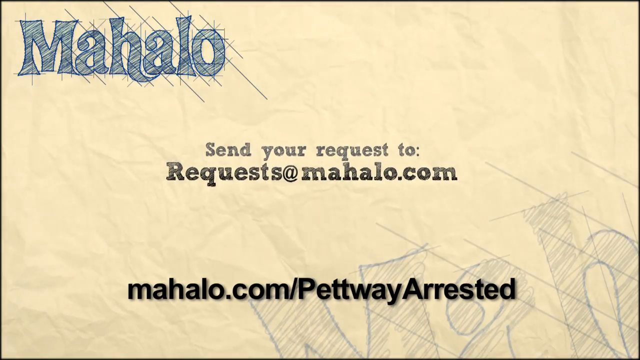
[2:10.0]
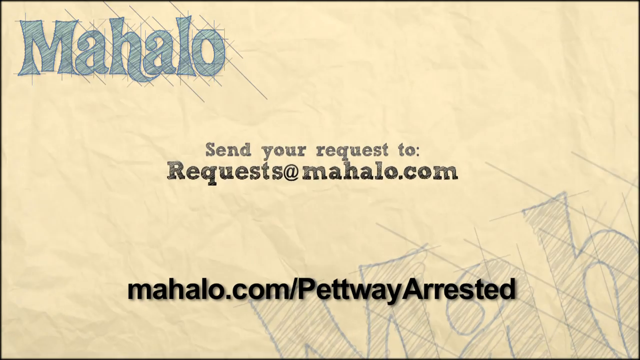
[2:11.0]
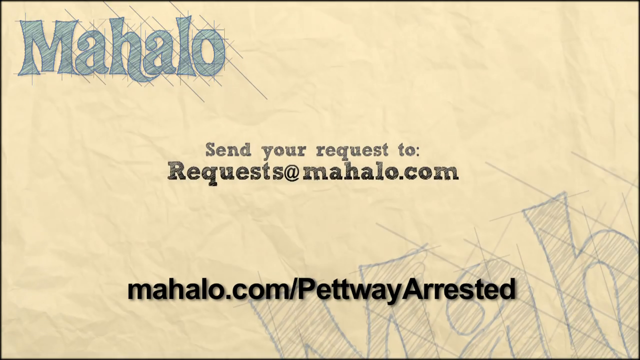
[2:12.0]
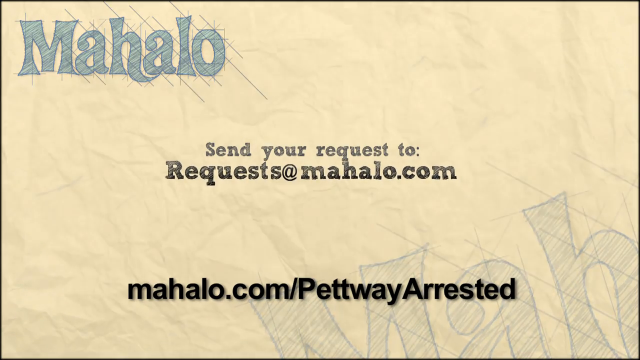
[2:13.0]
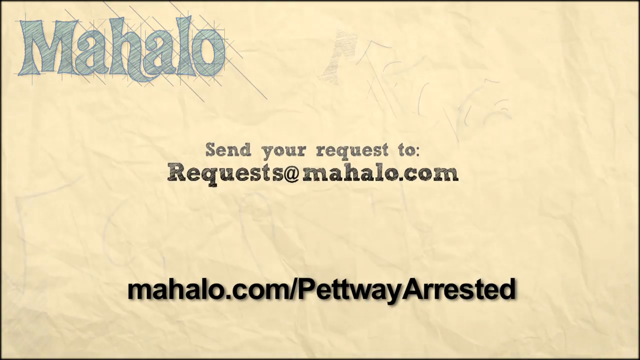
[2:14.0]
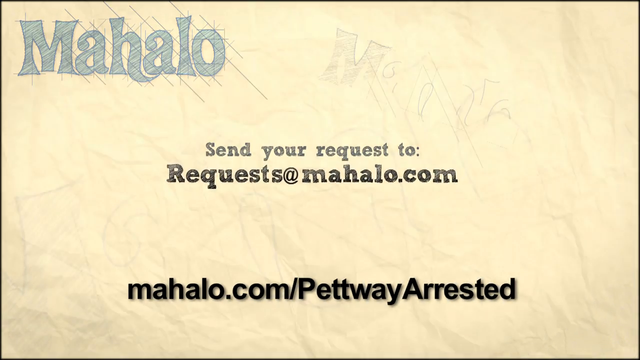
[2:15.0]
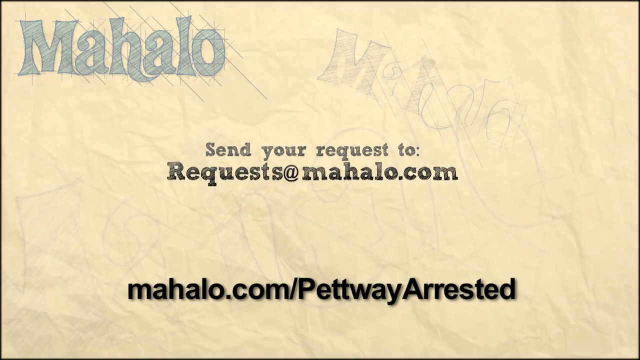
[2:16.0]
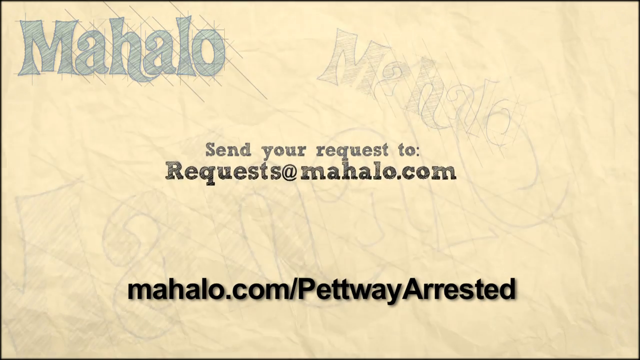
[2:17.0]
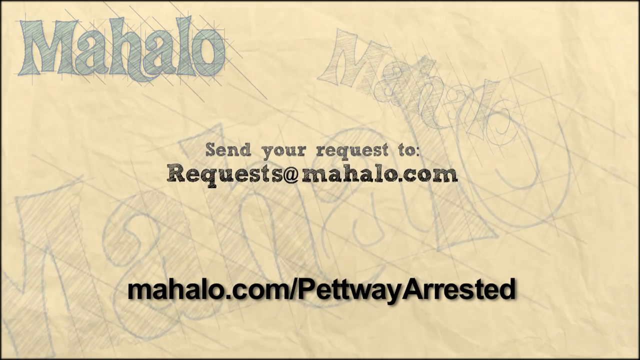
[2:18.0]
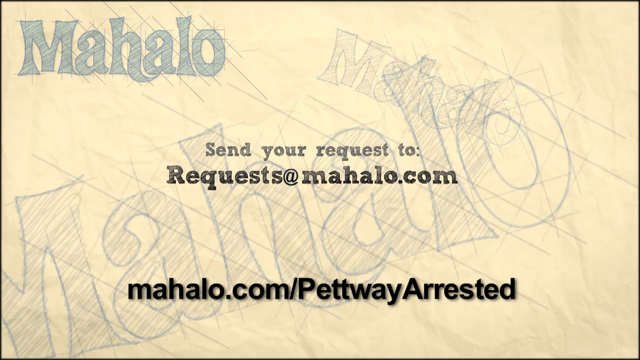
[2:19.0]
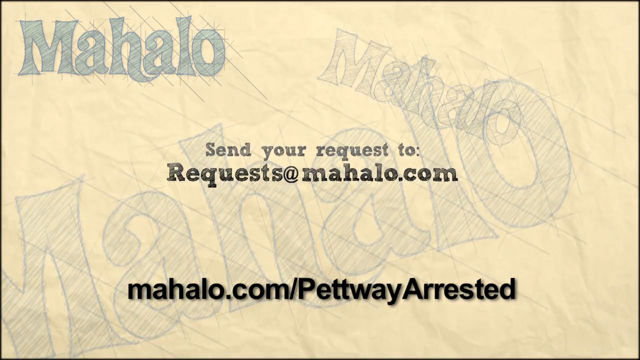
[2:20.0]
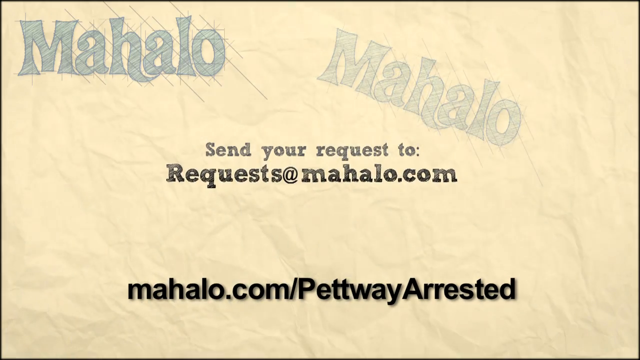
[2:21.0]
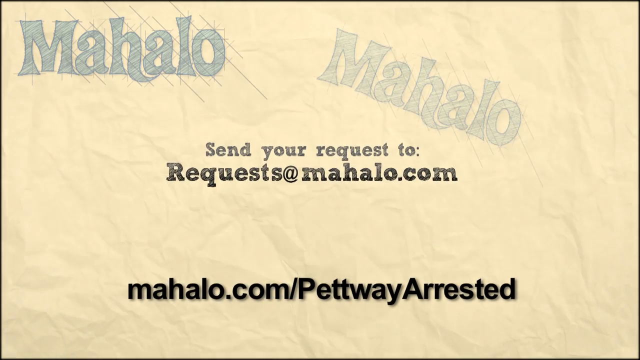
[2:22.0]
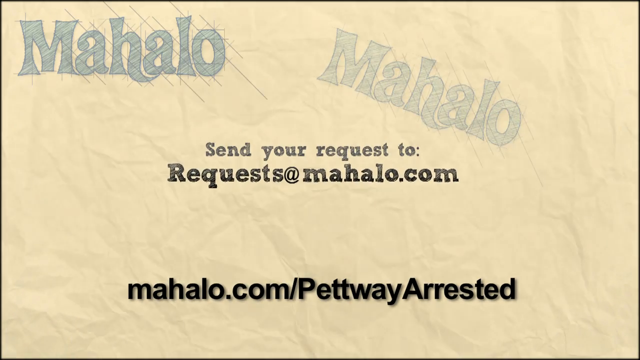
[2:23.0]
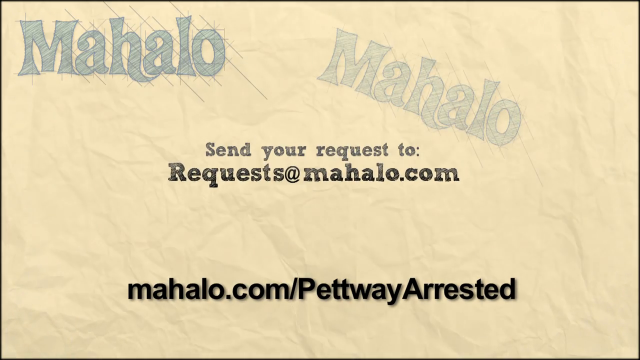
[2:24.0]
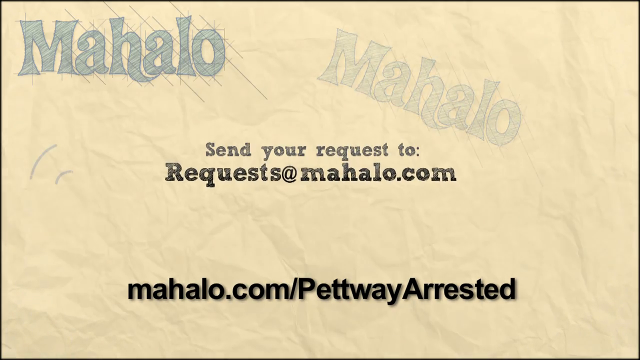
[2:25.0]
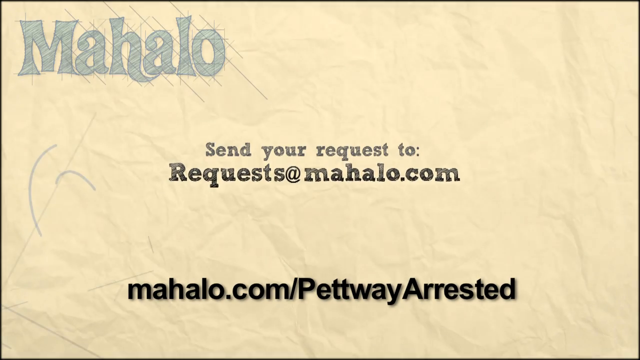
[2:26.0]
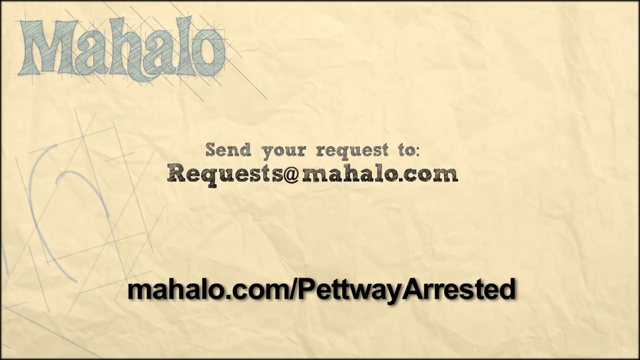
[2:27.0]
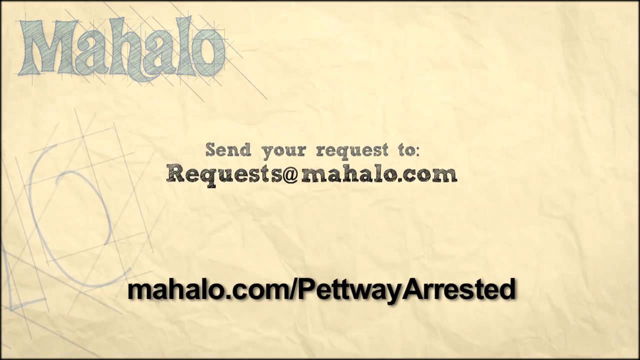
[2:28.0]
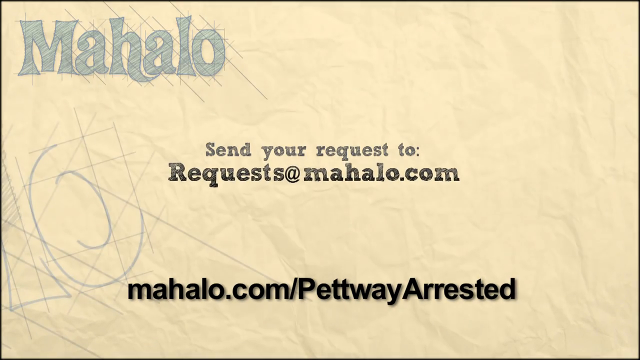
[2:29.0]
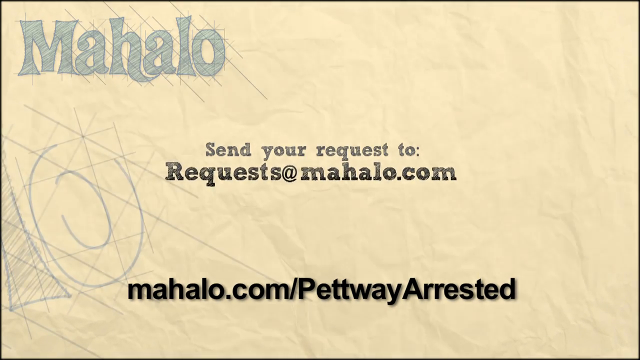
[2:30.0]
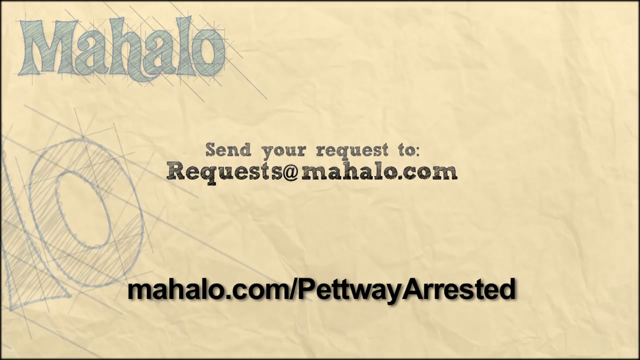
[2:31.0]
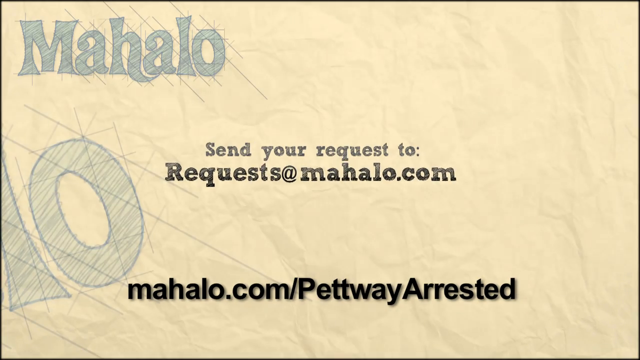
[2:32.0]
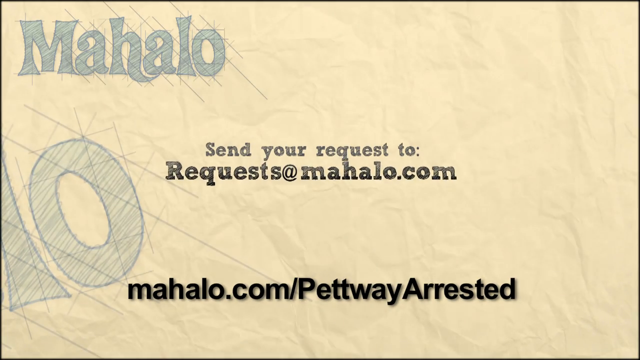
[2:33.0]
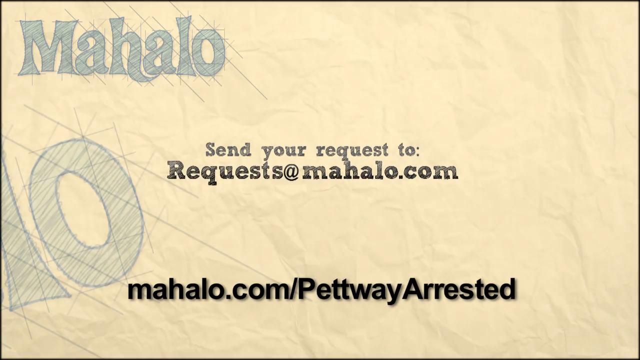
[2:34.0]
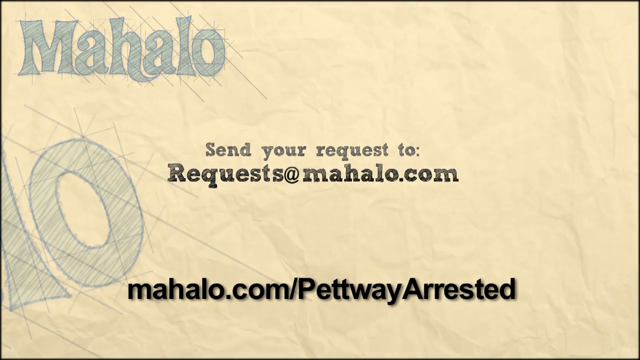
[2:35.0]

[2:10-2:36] The final screen has the same crumpled paper background as the opening screen. The word "Mahalo" is in the top left corner, with a black outline and blue letters filled with squiggles. In the center is the text "send your request to requests at mahalo.com", and below that is a URL, "mahalo.com/petway arrested". The text "requests at mahalo.com" in the middle bumps around several times in a little bit of motion. Also in motion, in the background in fainter color, the Mahalo logo is being created, with several lines sketching out the outlines of the letters. One appears just above the "send your request to" text, and then the Mahalo word gradually disappears. On the left side of the screen, again in the background in faint color, another "LO" is being drawn, presumably the end of Mahalo.